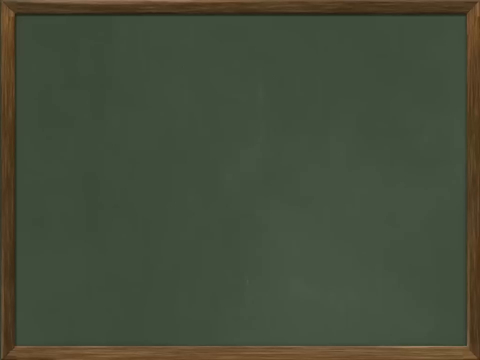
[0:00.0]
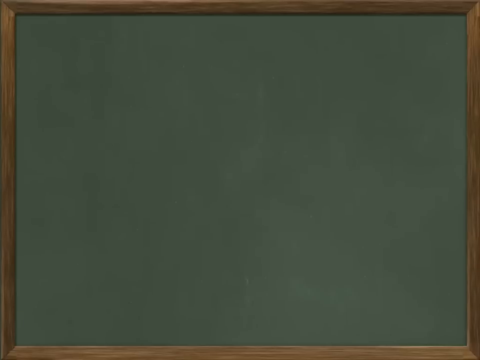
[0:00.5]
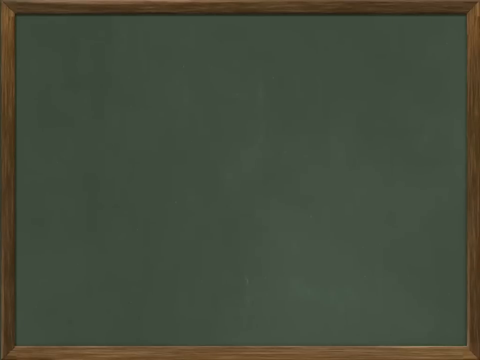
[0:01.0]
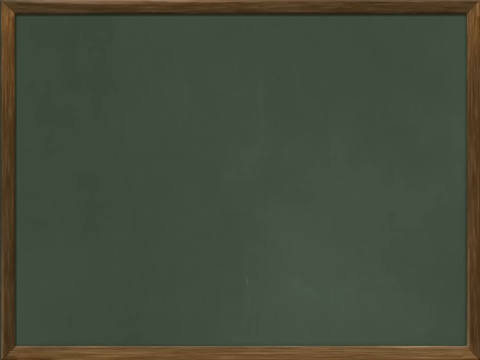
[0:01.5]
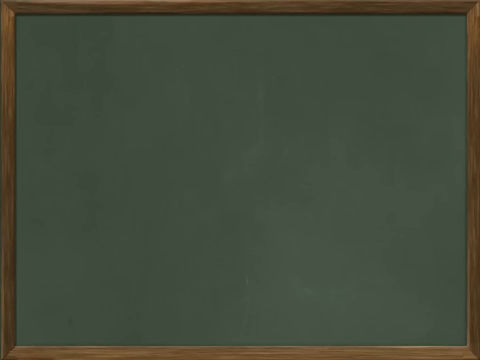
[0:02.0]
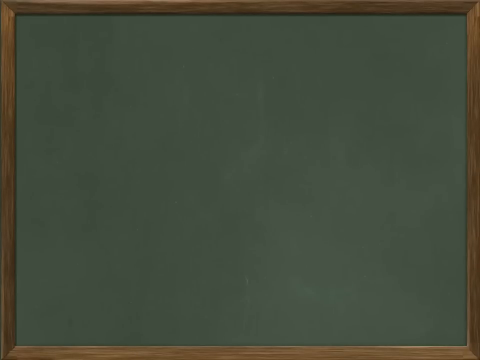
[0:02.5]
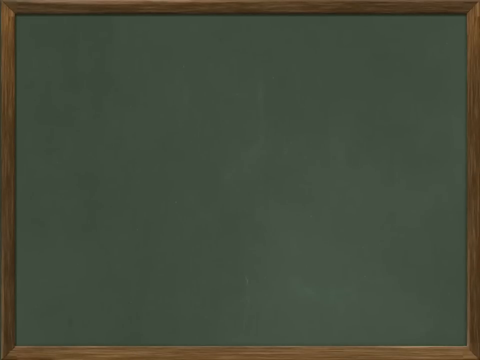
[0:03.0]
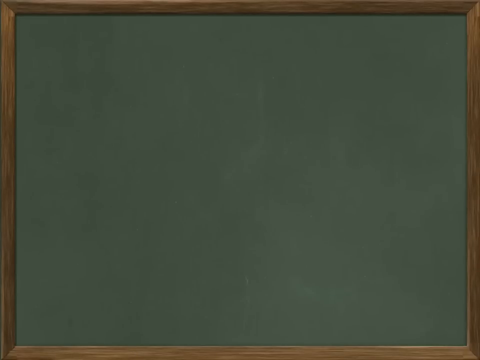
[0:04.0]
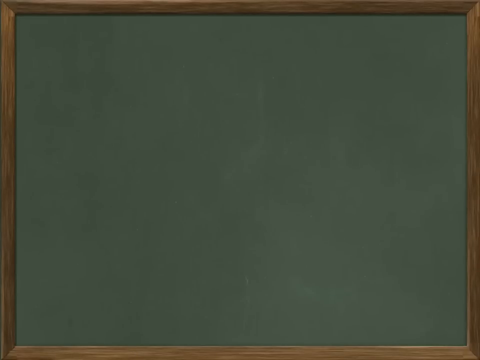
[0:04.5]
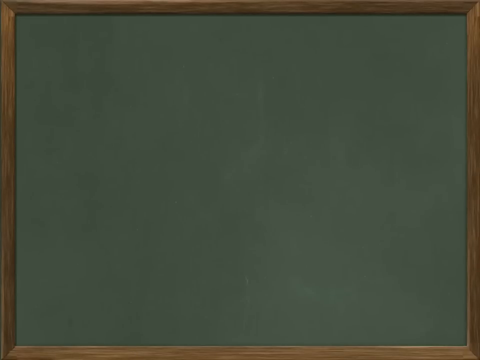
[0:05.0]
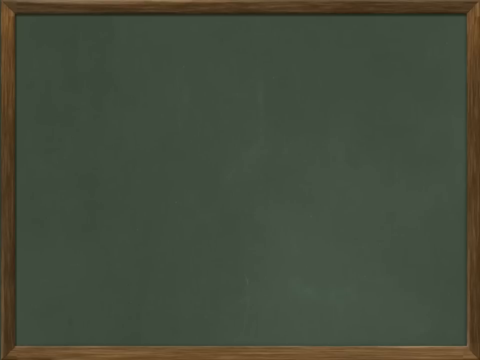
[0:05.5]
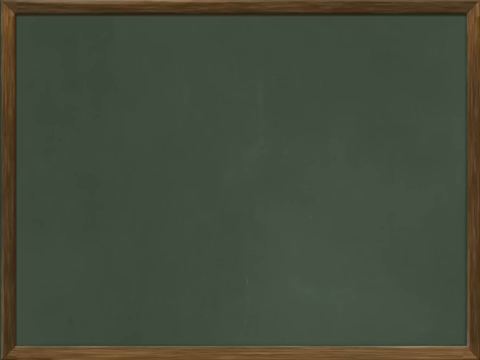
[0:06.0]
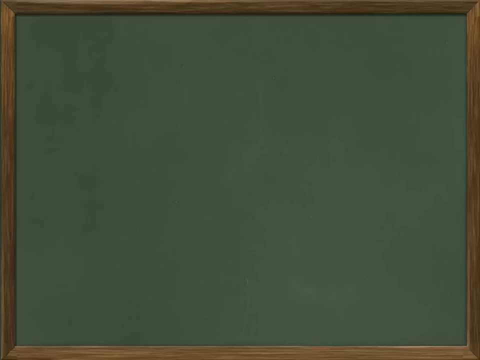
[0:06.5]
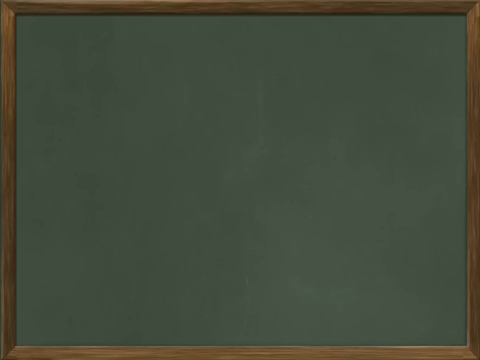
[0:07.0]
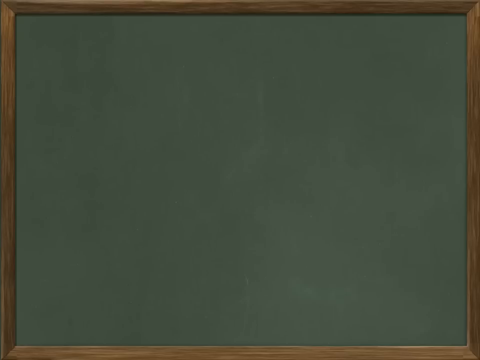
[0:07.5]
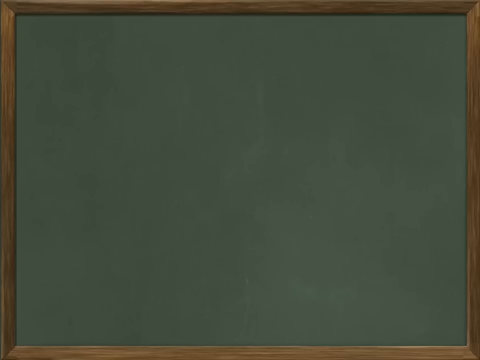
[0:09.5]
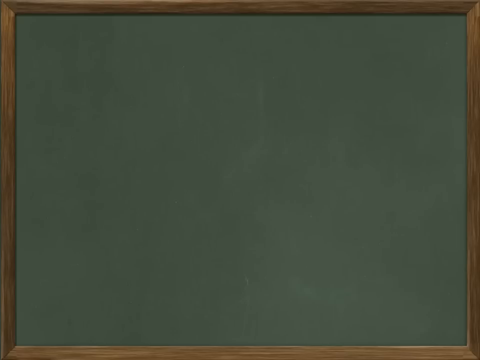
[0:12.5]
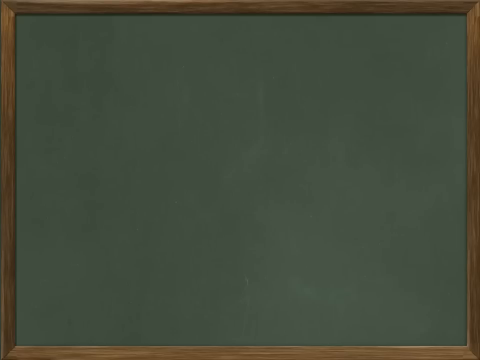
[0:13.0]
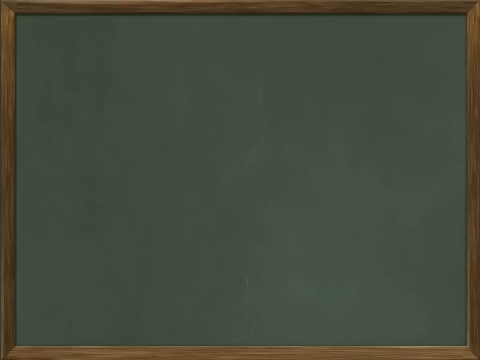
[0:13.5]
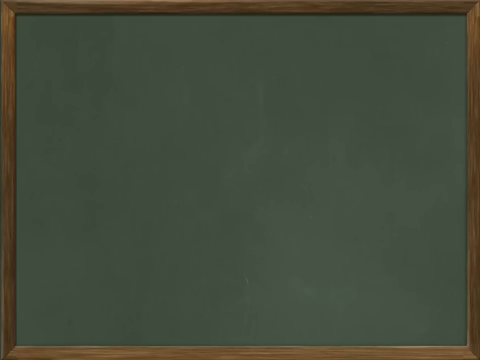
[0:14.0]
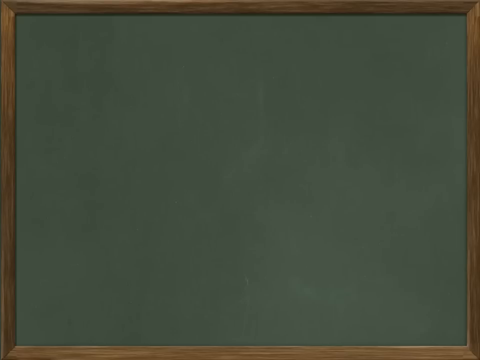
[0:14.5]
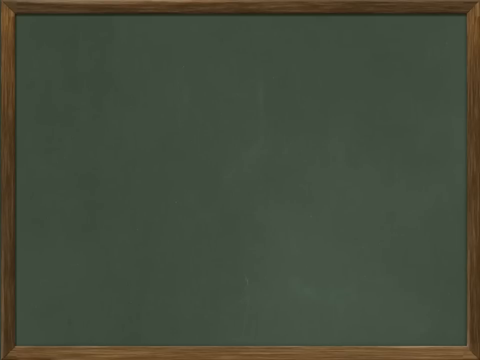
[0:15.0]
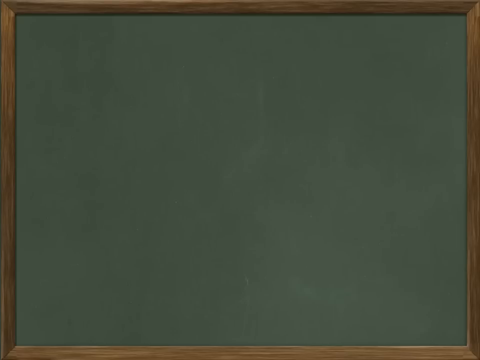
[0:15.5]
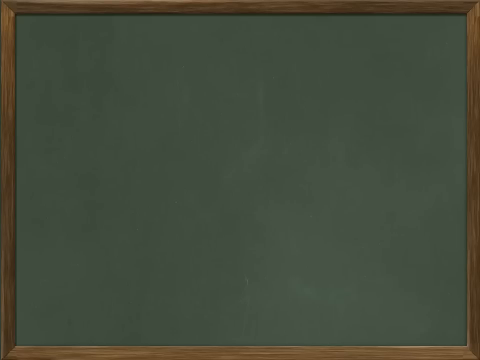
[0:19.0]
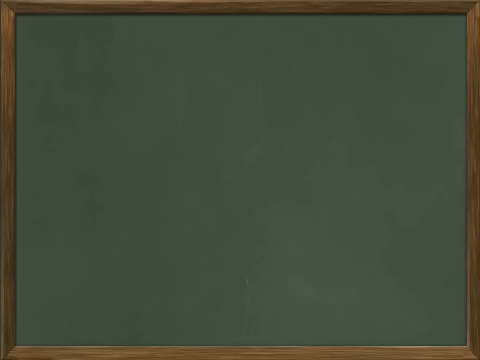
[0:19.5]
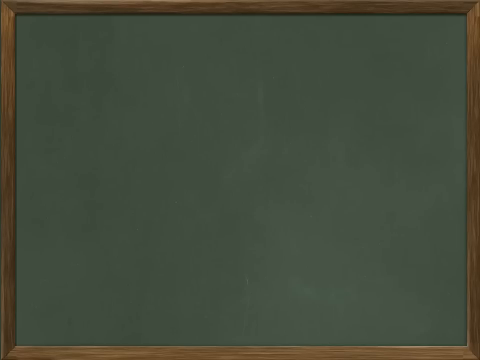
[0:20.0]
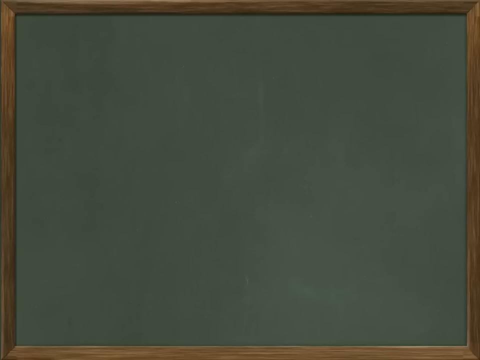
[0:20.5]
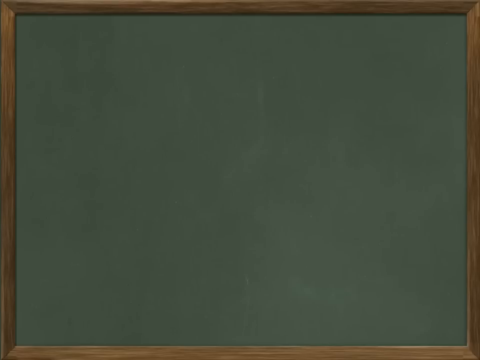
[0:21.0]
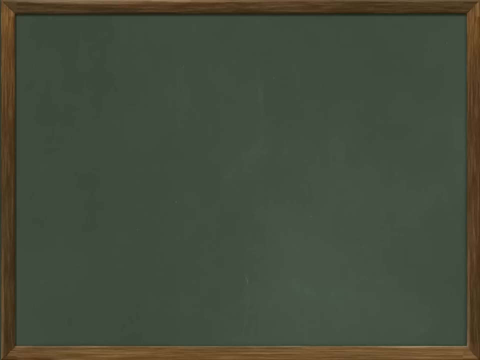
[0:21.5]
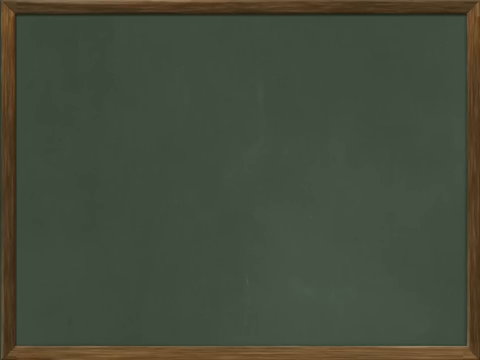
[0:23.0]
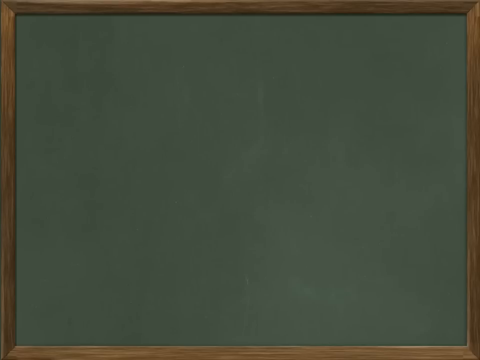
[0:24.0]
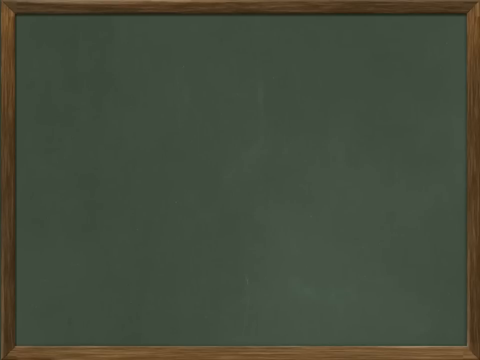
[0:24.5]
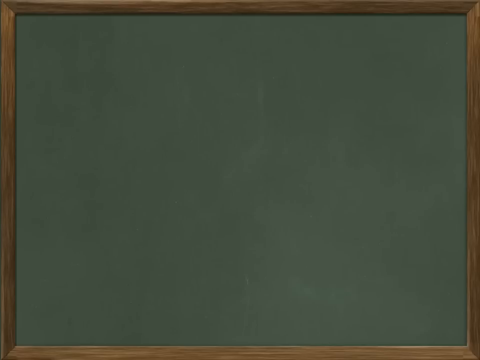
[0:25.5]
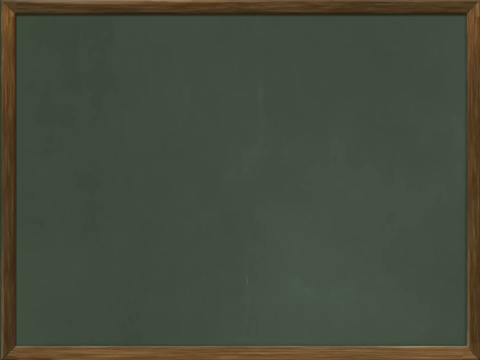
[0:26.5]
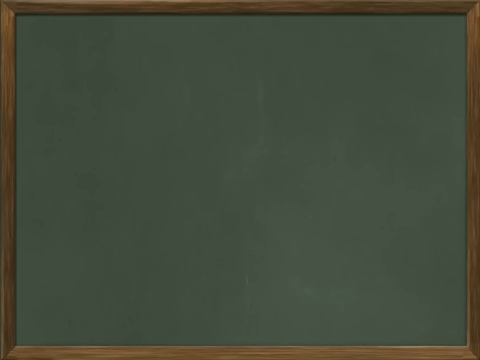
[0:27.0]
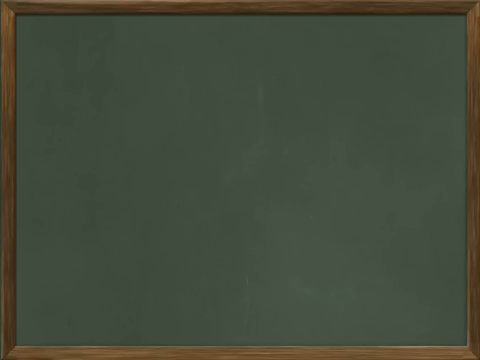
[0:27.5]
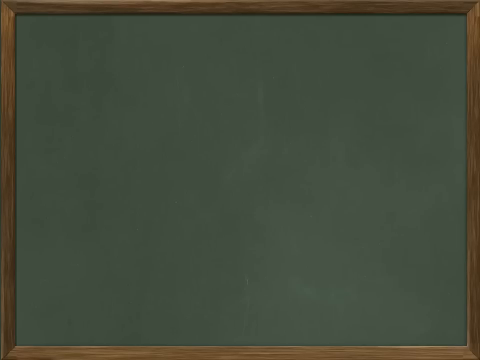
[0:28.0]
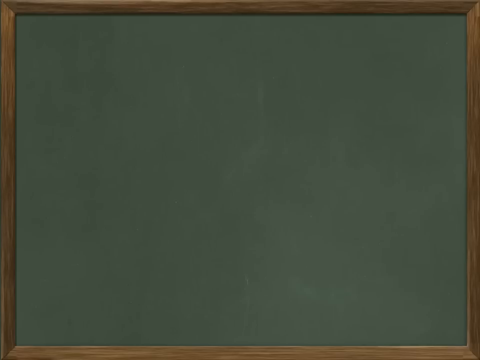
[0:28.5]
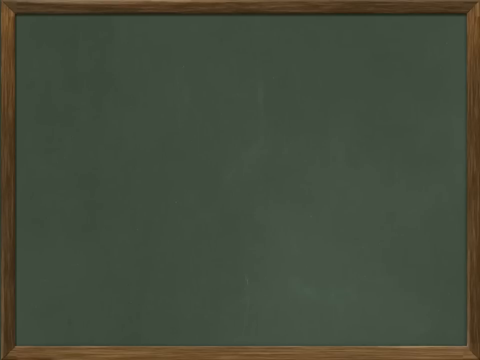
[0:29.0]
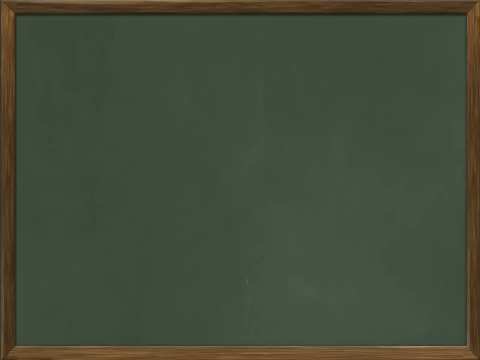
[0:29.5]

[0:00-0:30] A blank green board that looks like a chalkboard appears, clean and framed. For at least four seconds nothing is on the board and nothing really happens. It is a large board and nothing else is visible besides it. The green is possibly hunter green or evergreen, though the exact shade is unclear.